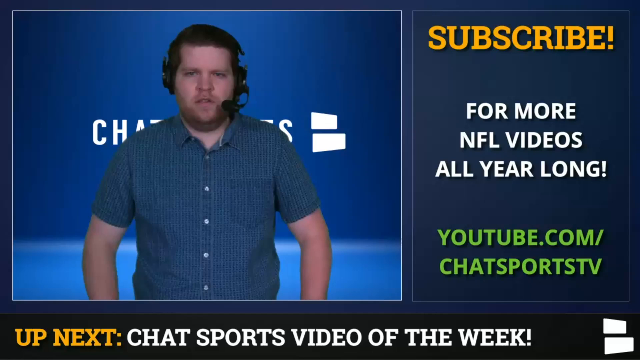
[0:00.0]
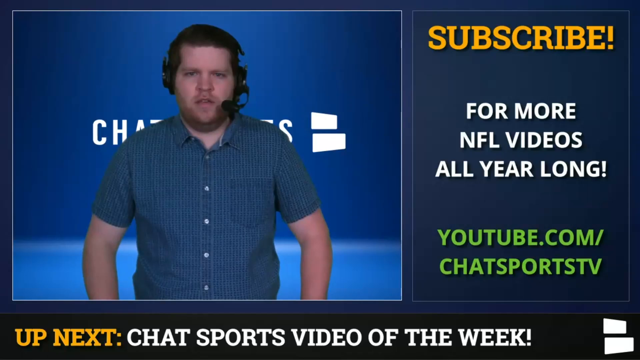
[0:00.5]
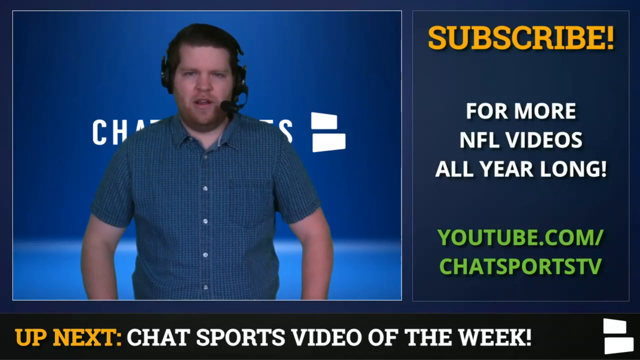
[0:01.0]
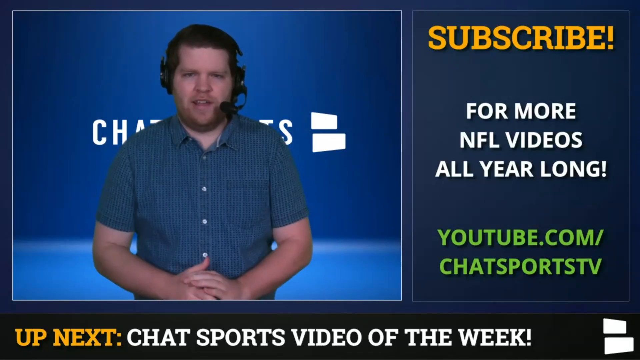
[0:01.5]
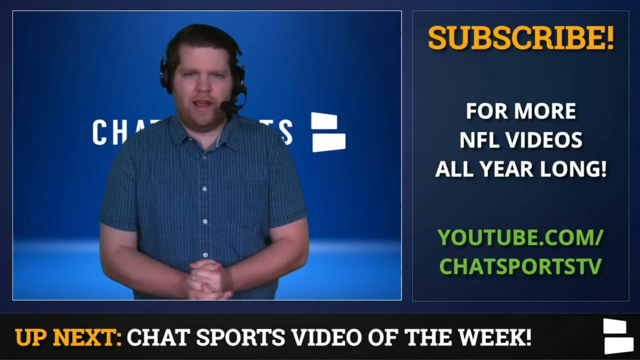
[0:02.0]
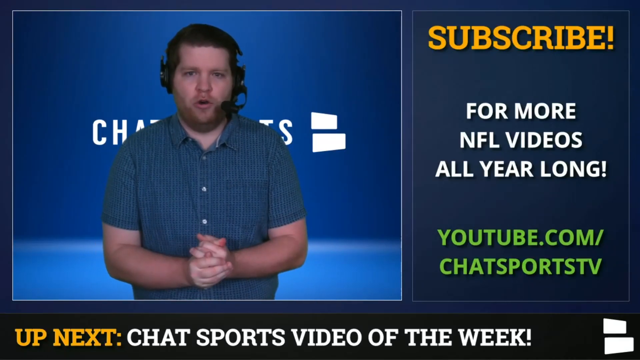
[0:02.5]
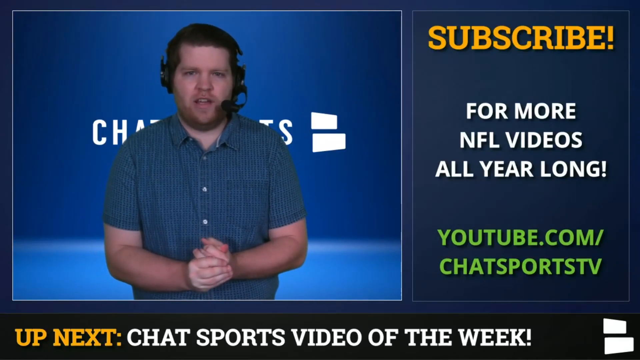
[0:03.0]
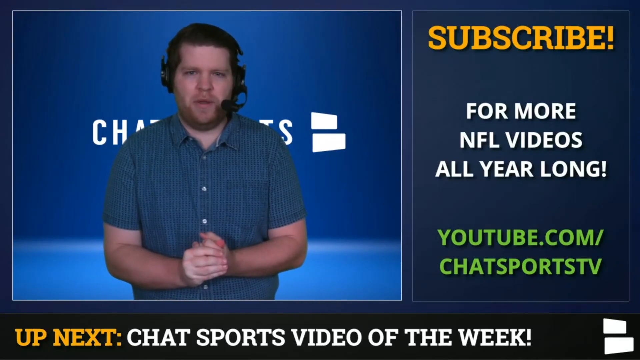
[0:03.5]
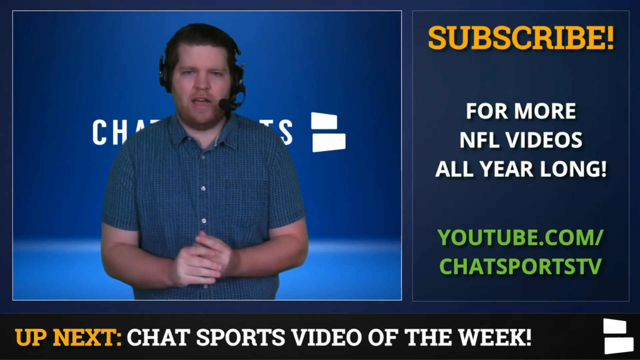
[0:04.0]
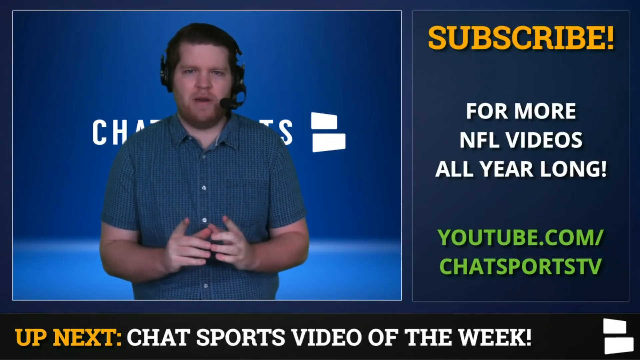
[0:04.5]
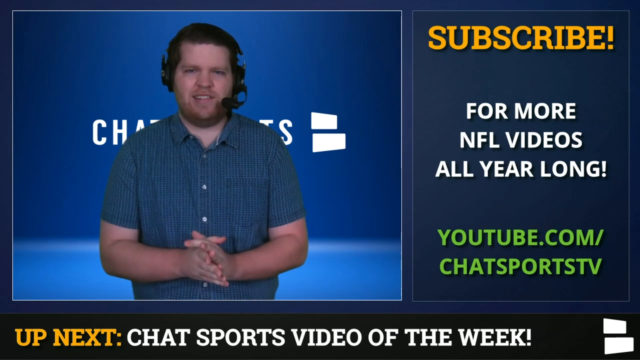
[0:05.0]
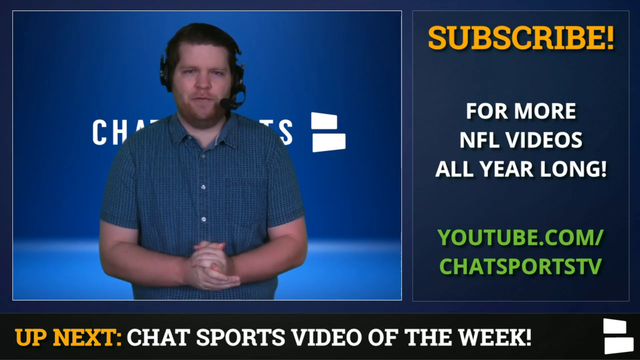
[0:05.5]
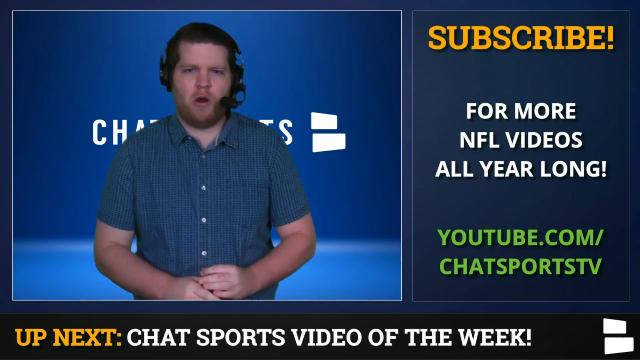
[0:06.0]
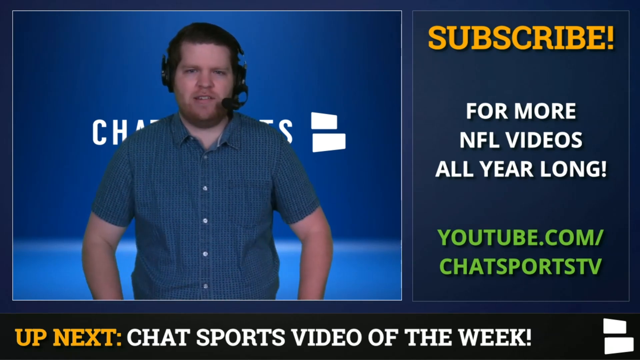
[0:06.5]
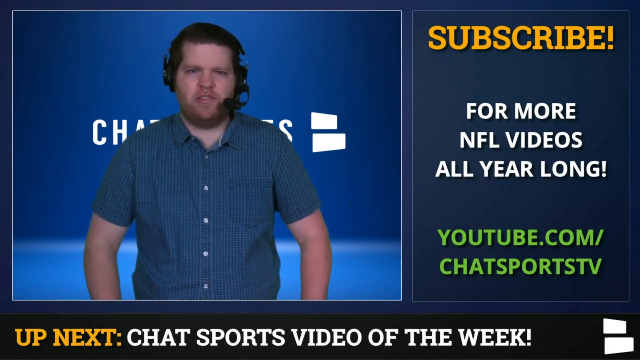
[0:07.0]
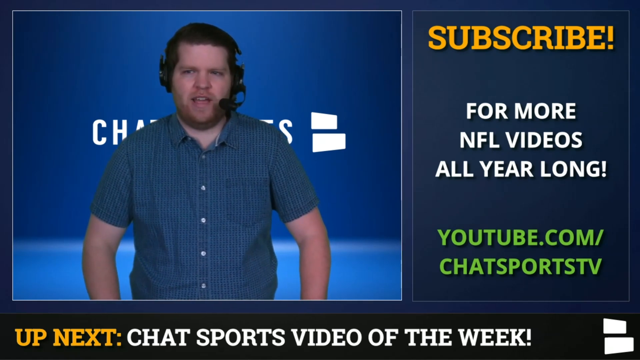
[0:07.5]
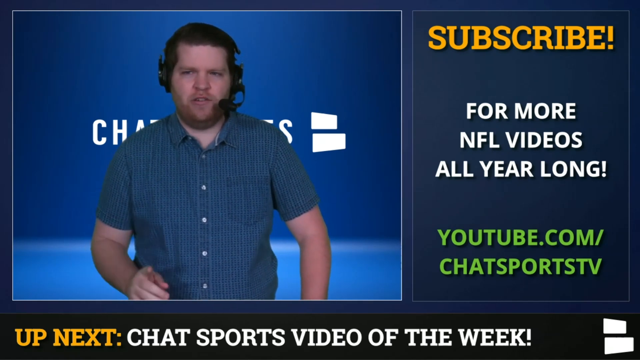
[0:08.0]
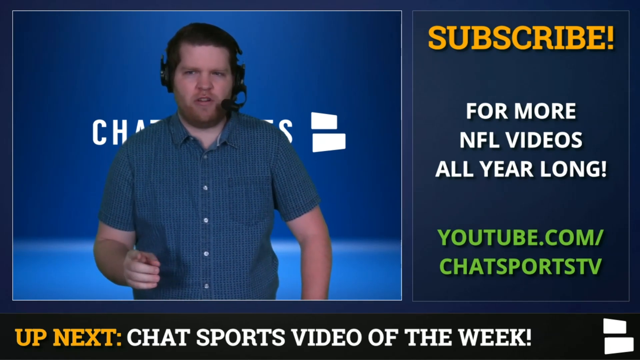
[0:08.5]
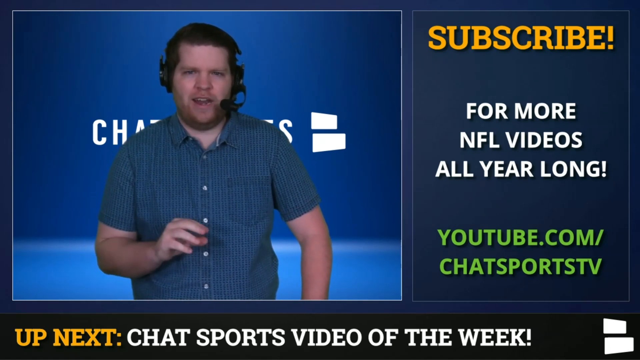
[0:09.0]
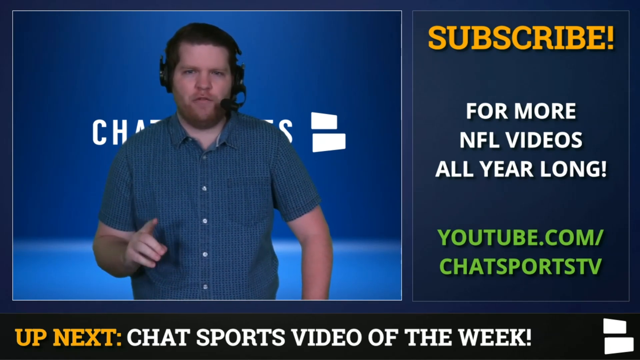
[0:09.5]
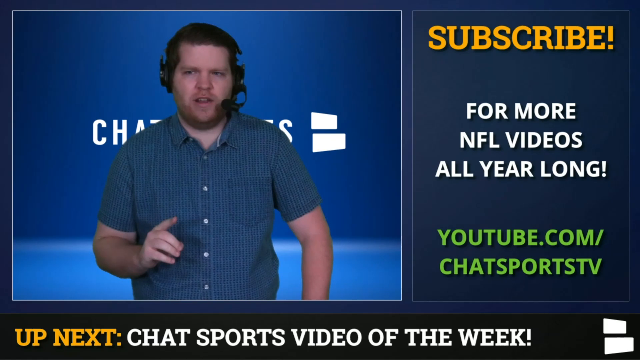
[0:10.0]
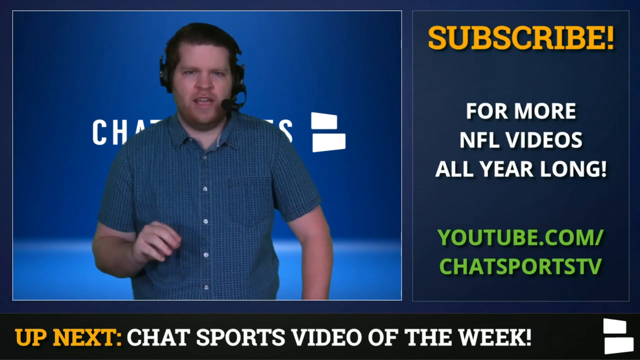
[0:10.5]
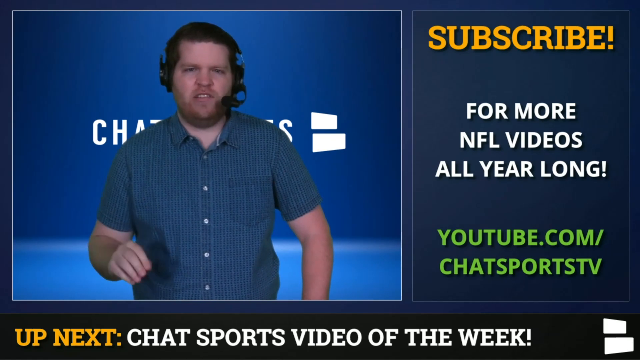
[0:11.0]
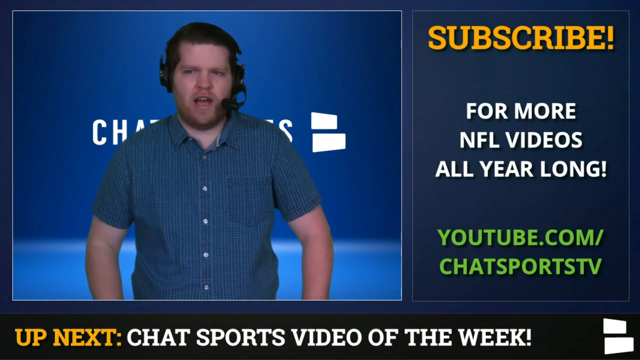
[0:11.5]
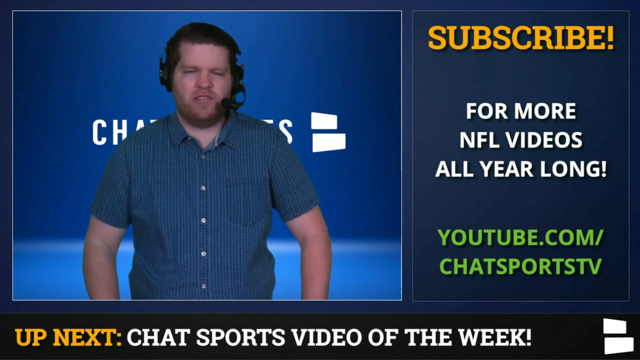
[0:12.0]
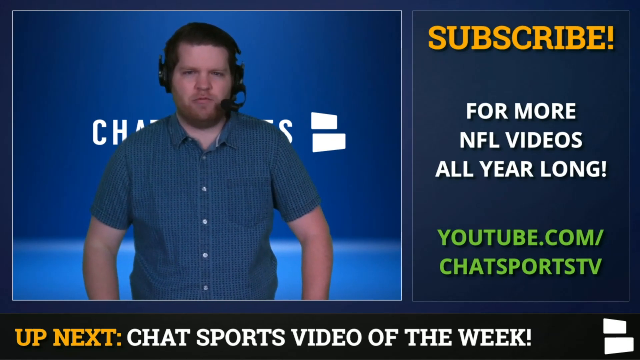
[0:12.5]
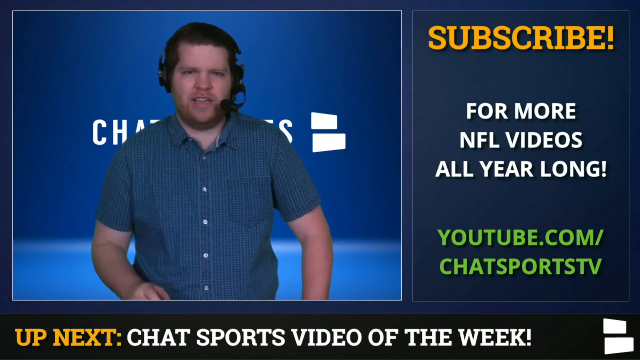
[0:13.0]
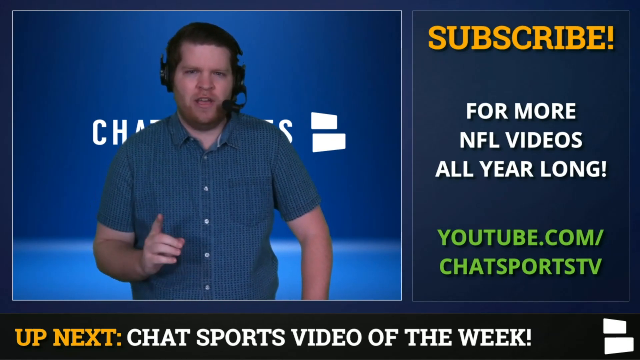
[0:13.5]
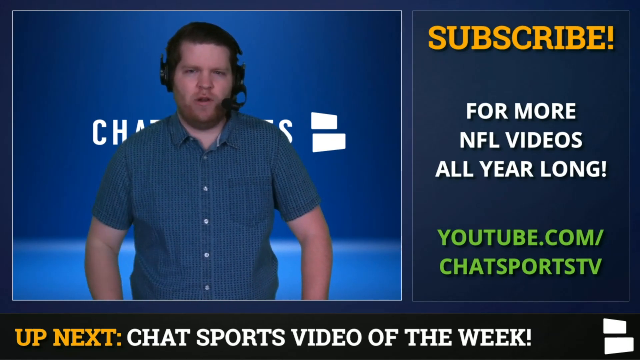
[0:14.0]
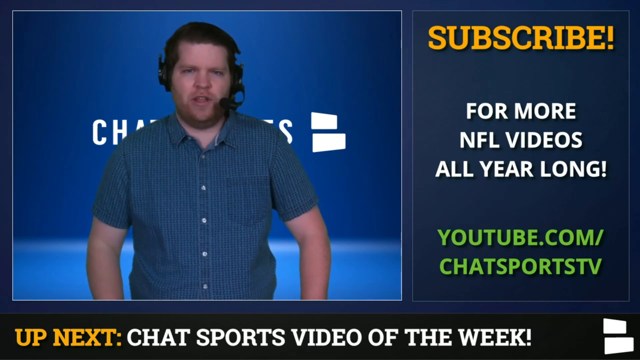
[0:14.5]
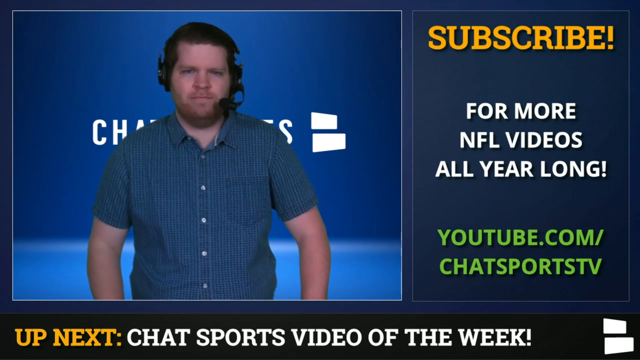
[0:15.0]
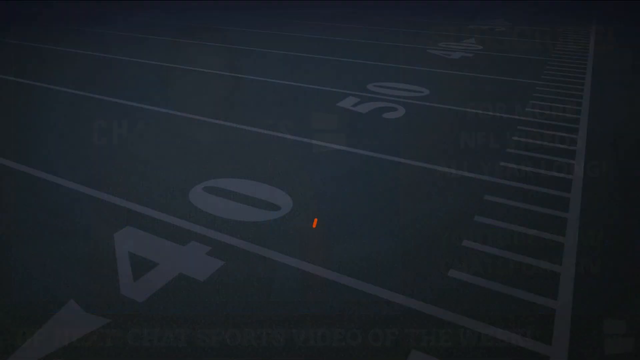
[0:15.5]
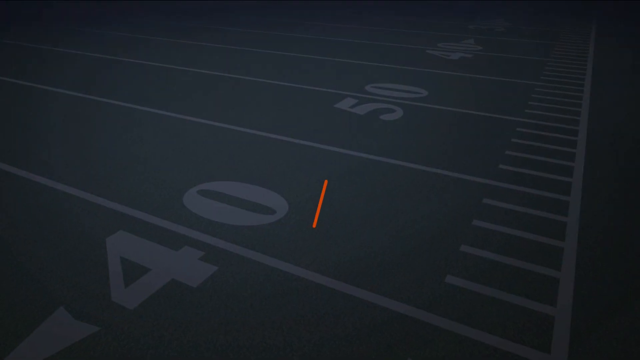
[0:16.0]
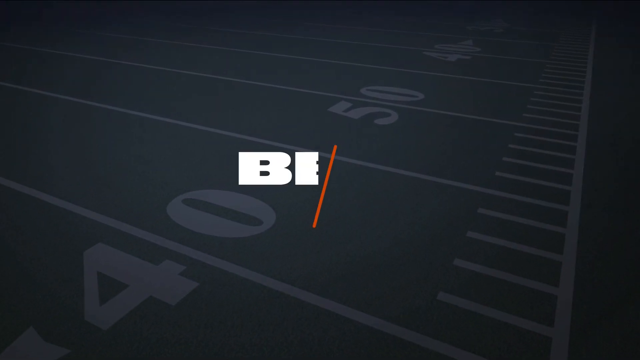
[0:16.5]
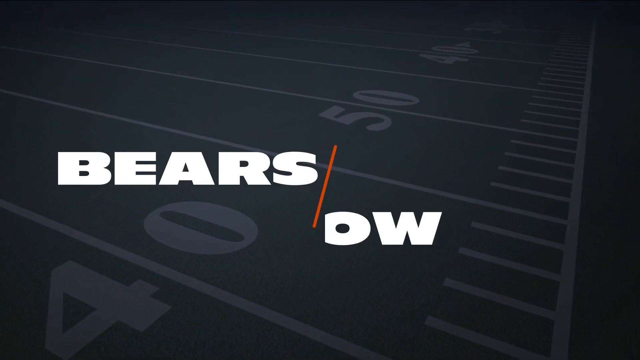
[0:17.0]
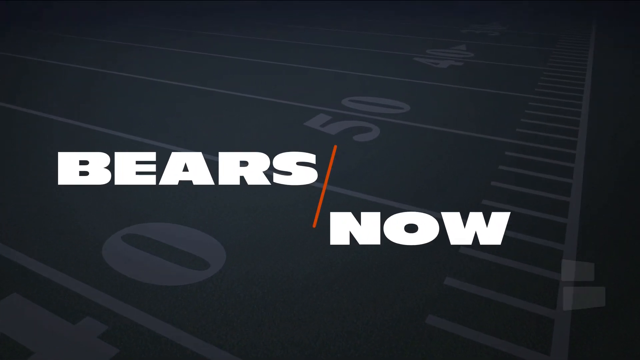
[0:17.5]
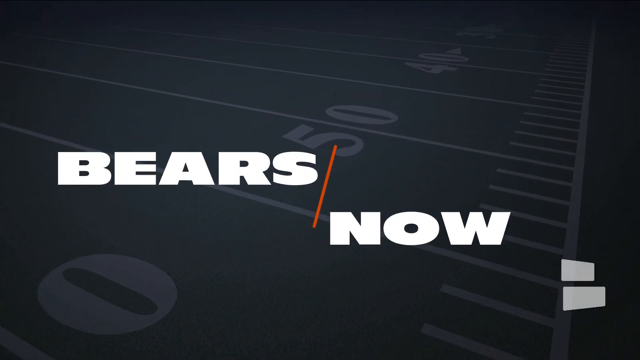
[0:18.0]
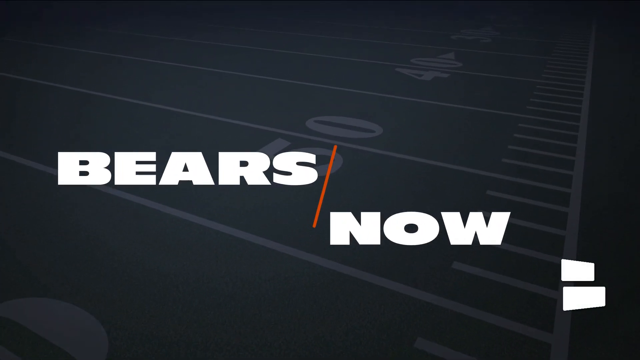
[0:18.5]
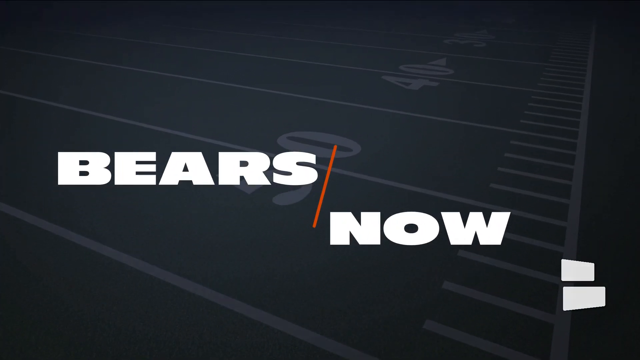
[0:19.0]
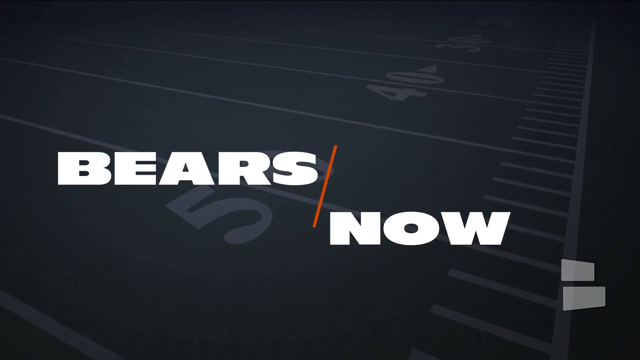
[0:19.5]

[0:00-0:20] A bearded man speaks on camera wearing a headset with a microphone that goes around the left side of his cheek. He wears a blue button-down shirt. His left arm stays stationary and his left hand is not visible, while he constantly uses his right hand to emphasize points. The show he is promoting is called Bears Now and appears to be a football show: "Bears Now" appears on a screen that looks like a football field with field markings, though it is brown. In orange at the upper right corner is the word "subscribe"; in white in the middle is "for more NFL videos all year long"; and underneath that is "youtube.com/chat sports". Behind him is a sign with something written in white that cannot be read; only two white lines are visible to the side of his left shoulder.